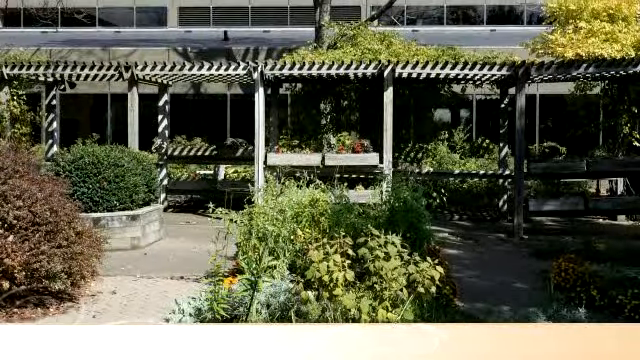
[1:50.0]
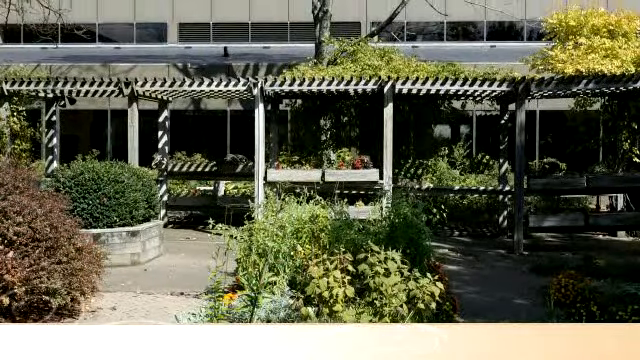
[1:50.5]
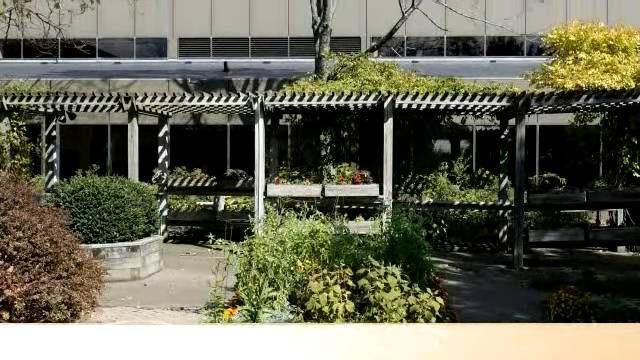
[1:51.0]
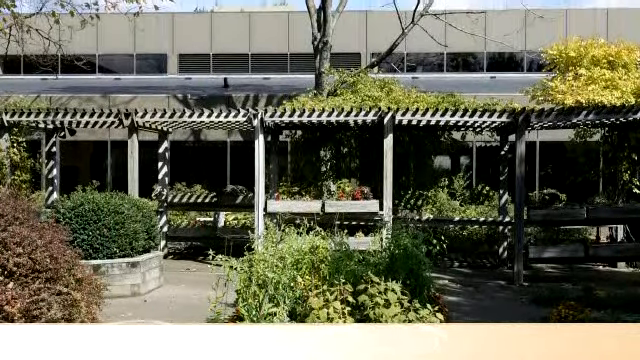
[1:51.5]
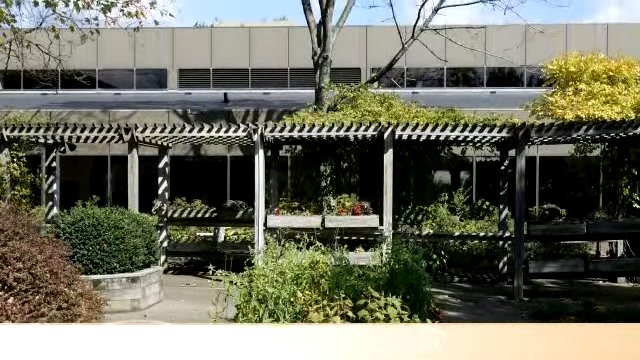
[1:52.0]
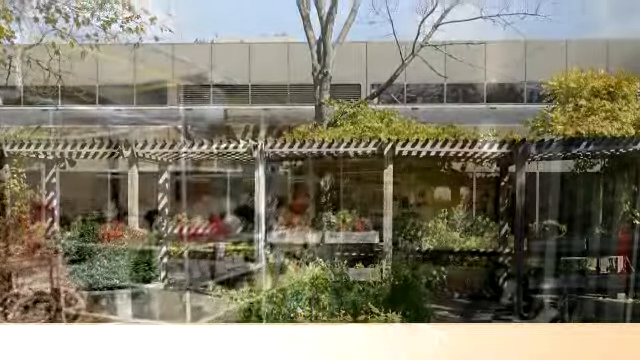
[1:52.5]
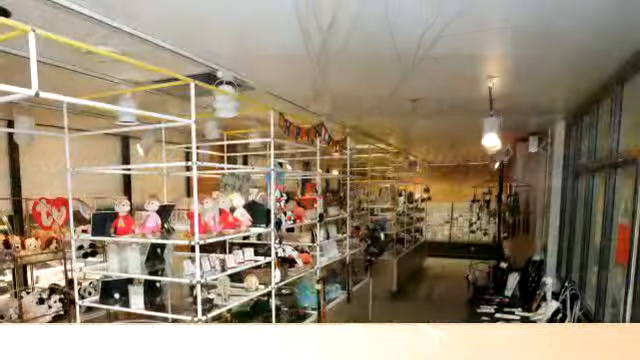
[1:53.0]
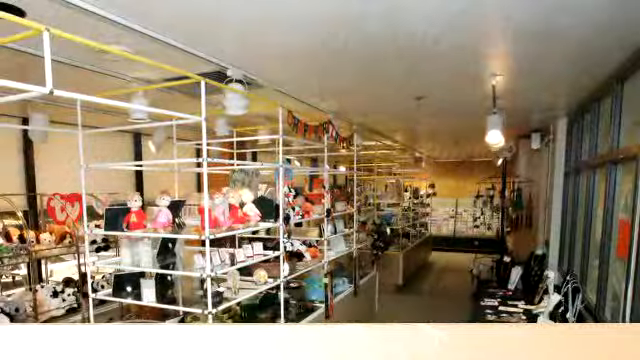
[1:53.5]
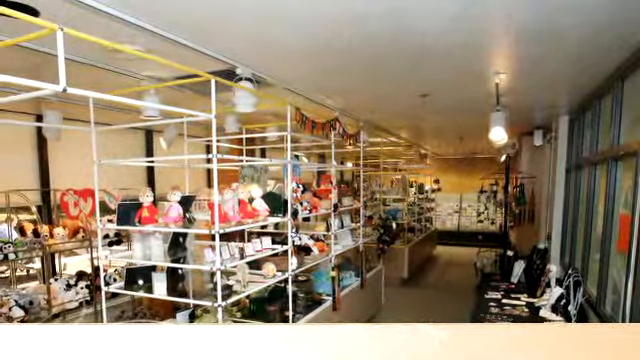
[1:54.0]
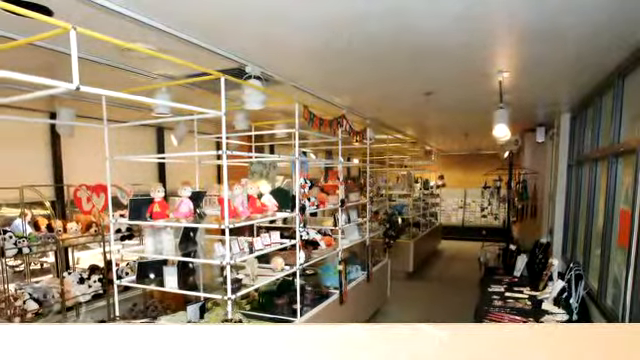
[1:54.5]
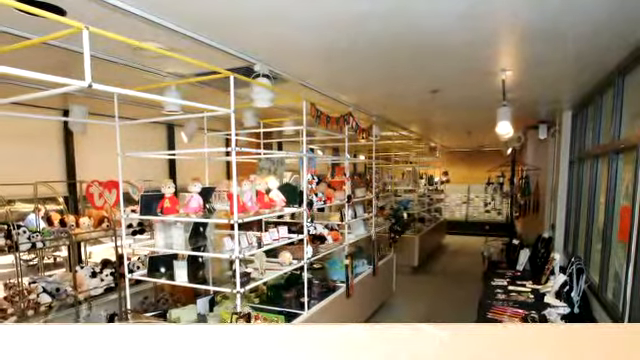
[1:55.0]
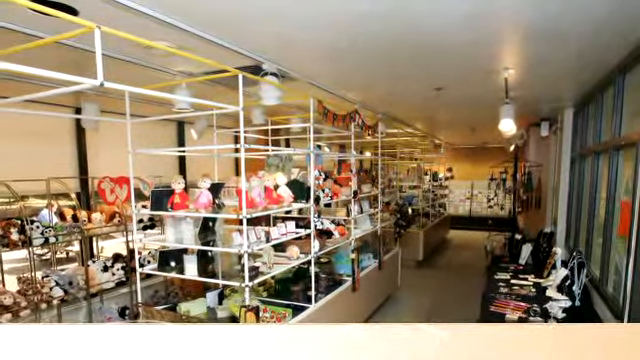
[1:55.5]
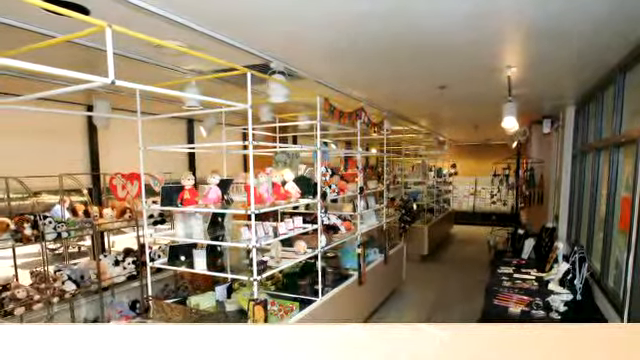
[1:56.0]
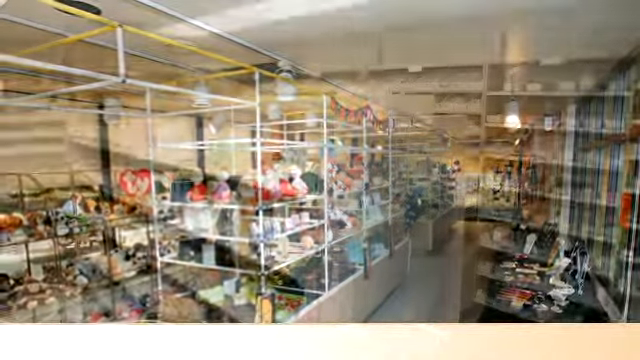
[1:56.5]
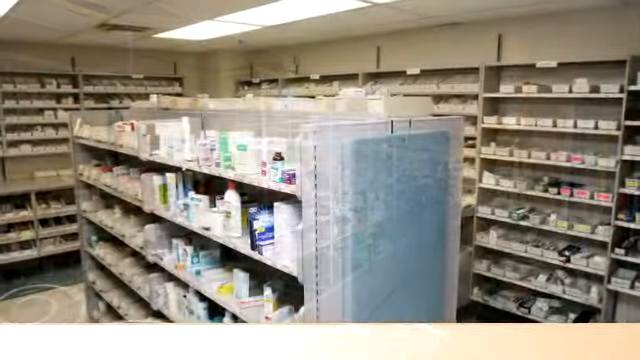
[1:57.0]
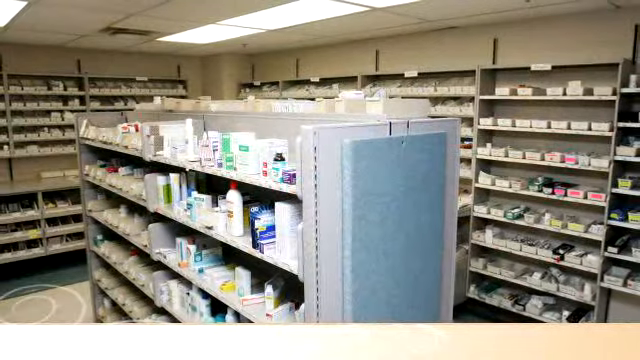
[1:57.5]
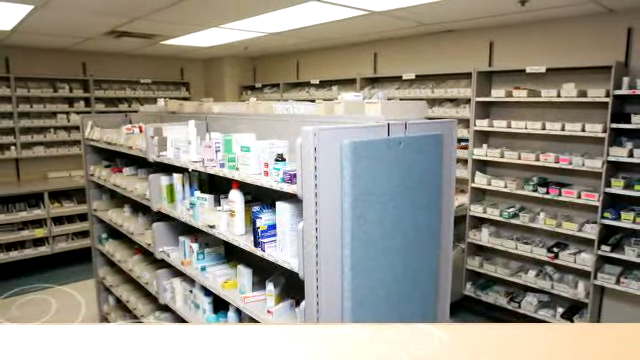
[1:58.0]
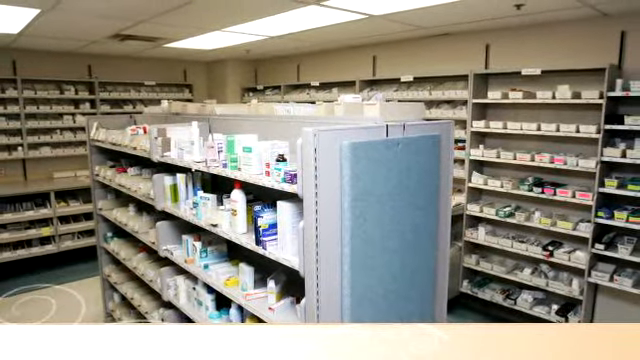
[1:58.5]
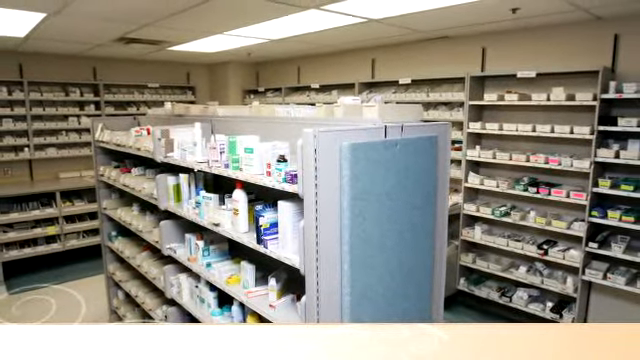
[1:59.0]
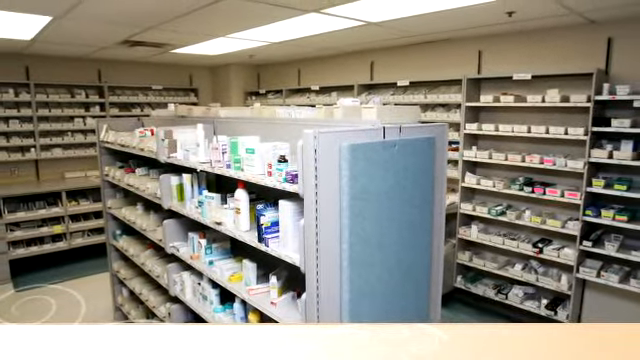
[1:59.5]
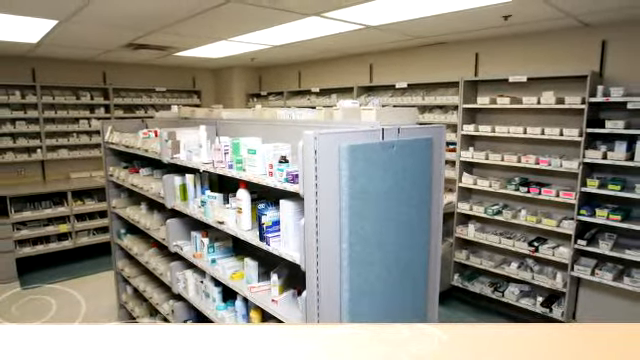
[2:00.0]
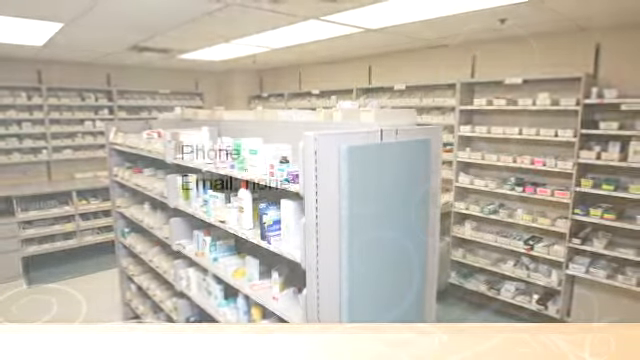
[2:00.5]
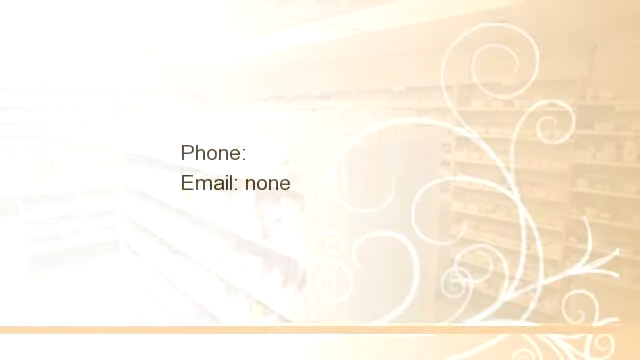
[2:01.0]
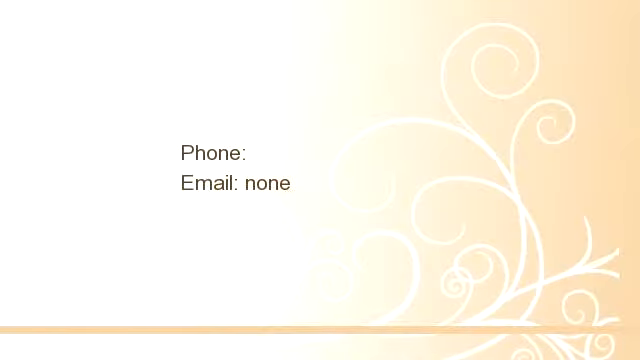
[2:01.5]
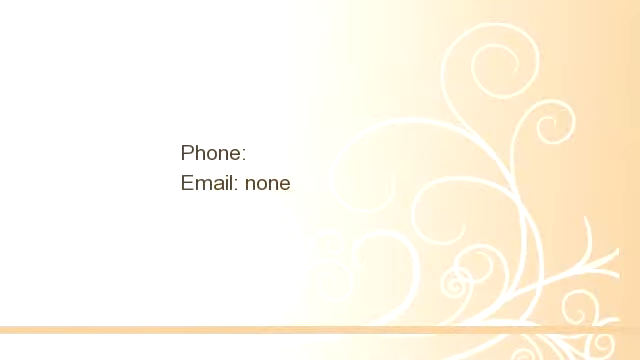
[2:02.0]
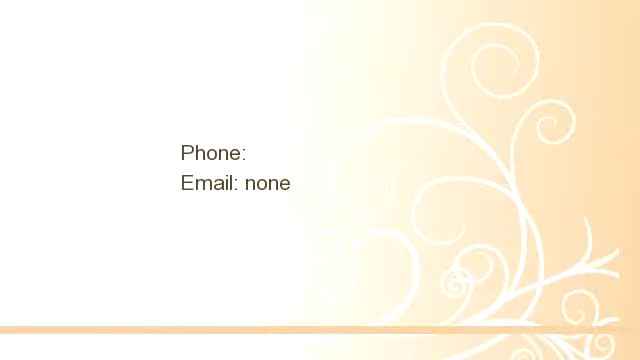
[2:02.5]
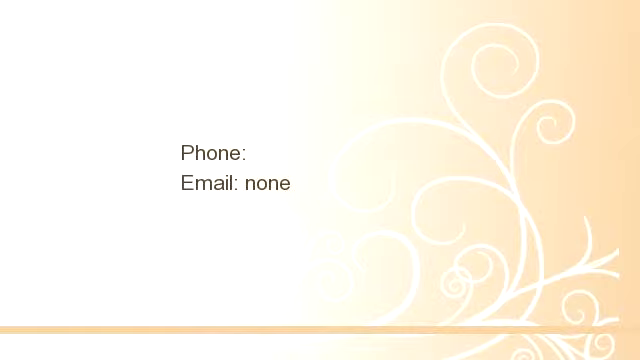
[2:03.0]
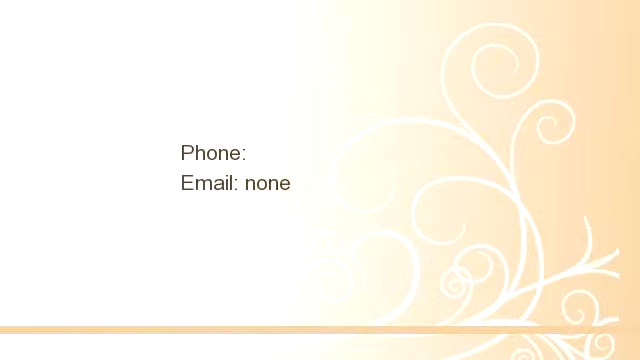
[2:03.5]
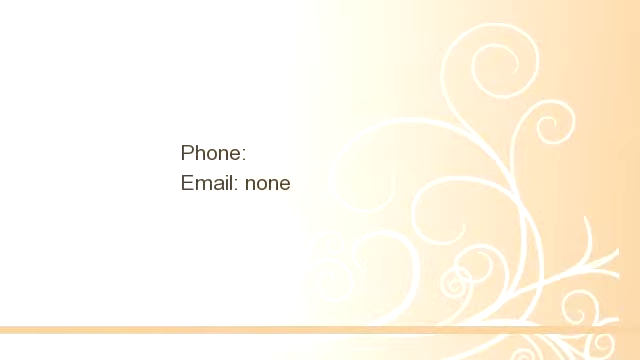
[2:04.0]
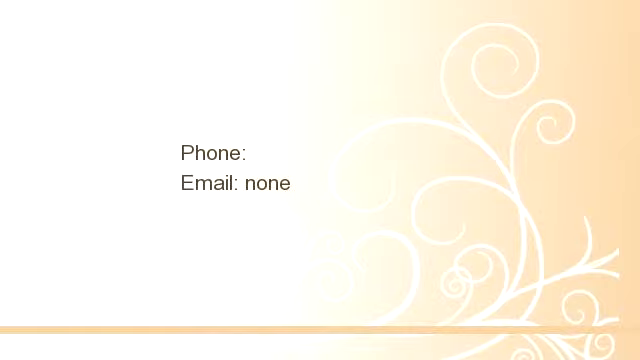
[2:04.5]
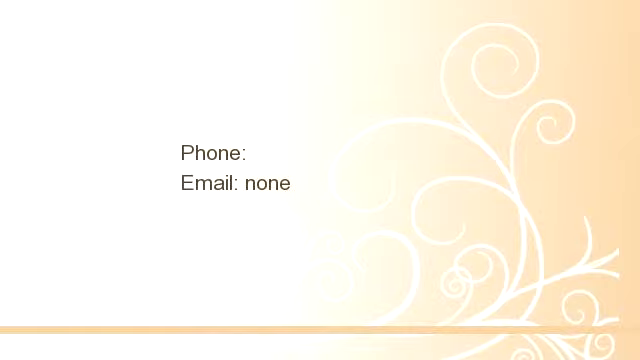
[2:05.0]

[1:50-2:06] The back garden has a trellis and potting boxes for plants and herbs, with smaller things on racks and in larger pots on the ground, almost as though an herb or floral garden is being grown. The tops of the trellises are covered in items too. The video cuts to what looks like a gift shop with various logos and items on the shelves, then phases to what looks like an on-site pharmacy with typical gray-backed shelving, bottles and boxes divided by item; some are labeled with bright colored labels, others are in trays. It pulls all the way back out to a final wipe screen for contact information that is not filled in, as if published without editing that part. It reads "phone" followed by a blank, and "email" followed by a blank, with "none" also on it. The whole video is a series of photos phased in rather than live video, and it stays on the final screen with the unfilled information.